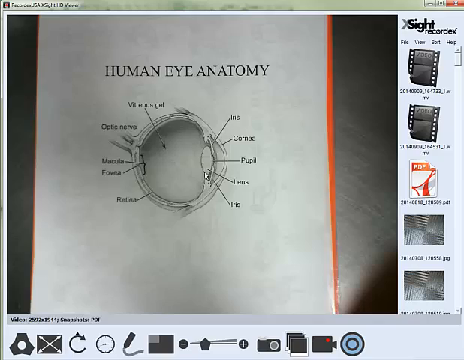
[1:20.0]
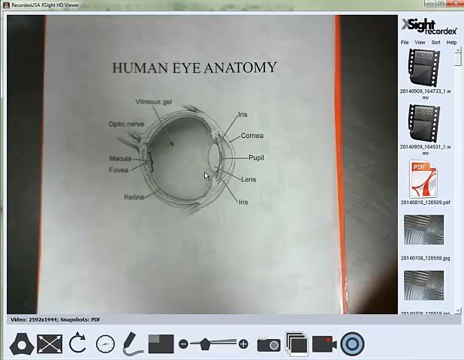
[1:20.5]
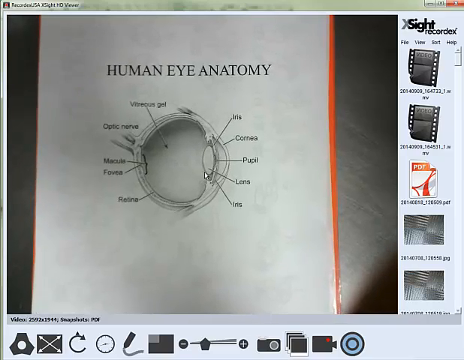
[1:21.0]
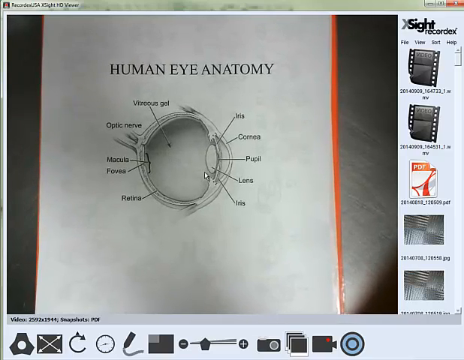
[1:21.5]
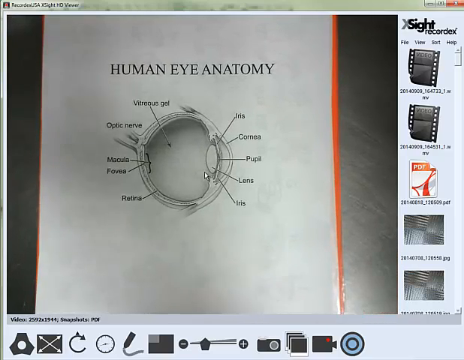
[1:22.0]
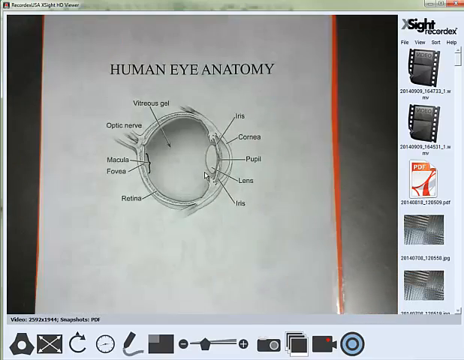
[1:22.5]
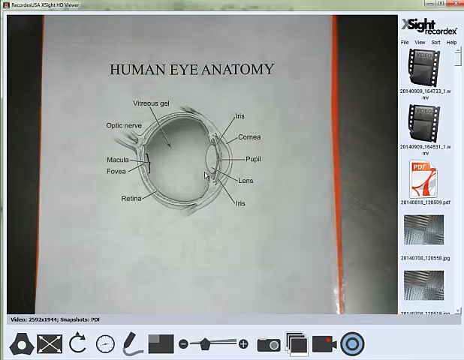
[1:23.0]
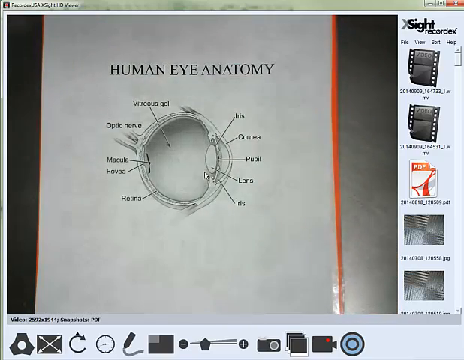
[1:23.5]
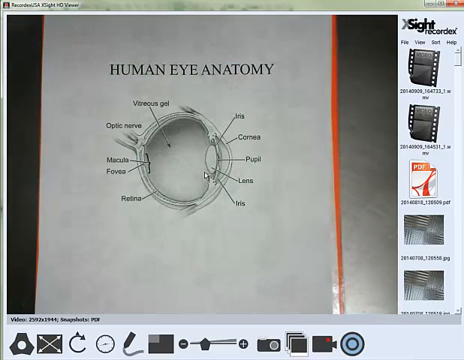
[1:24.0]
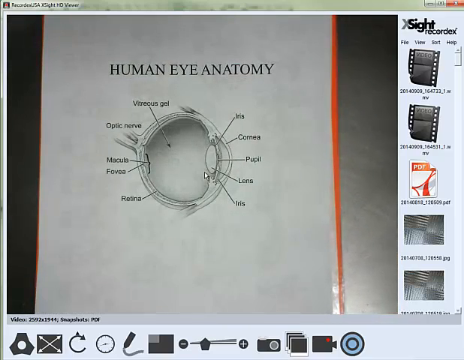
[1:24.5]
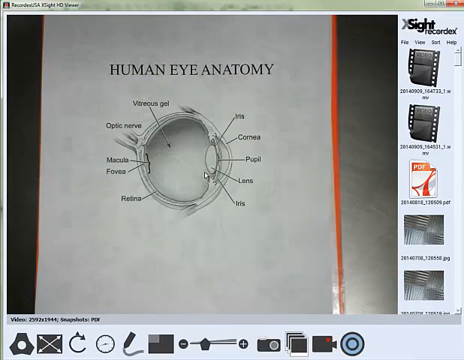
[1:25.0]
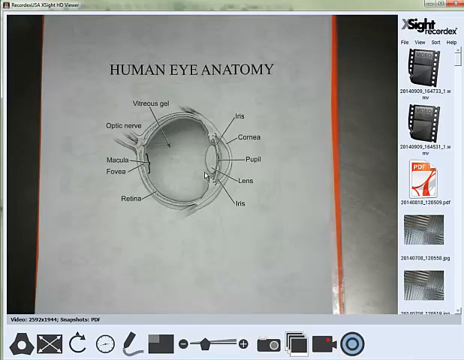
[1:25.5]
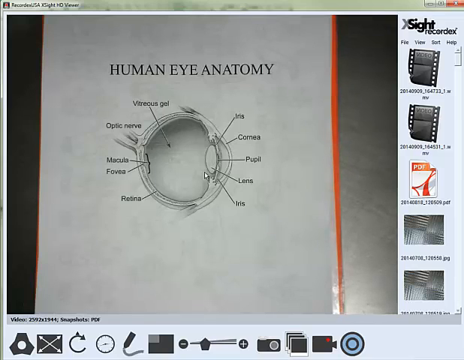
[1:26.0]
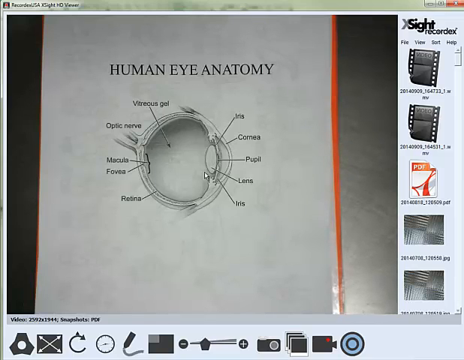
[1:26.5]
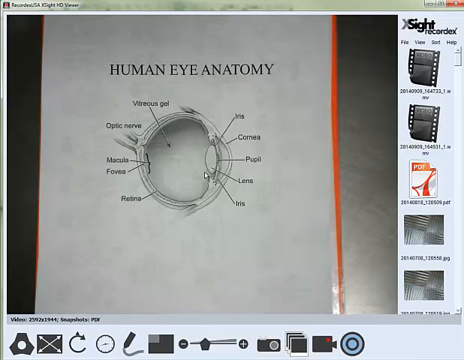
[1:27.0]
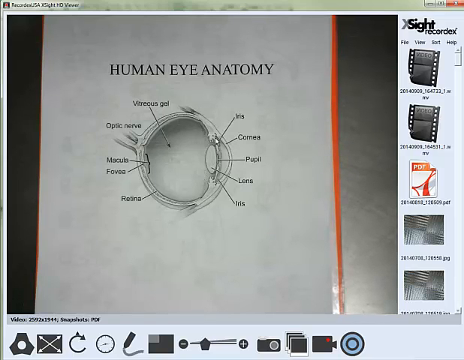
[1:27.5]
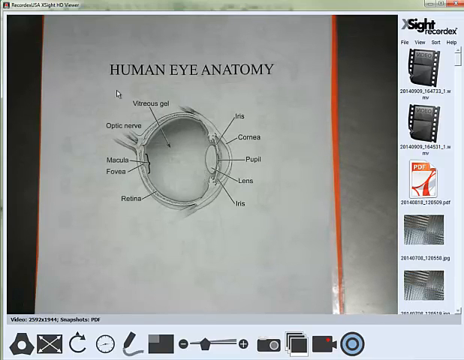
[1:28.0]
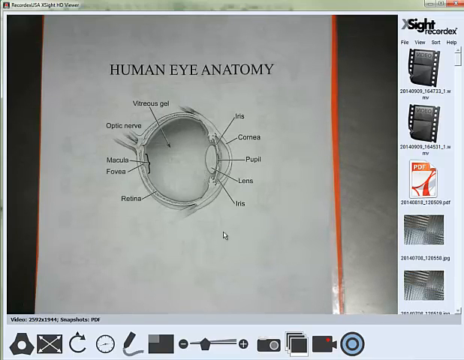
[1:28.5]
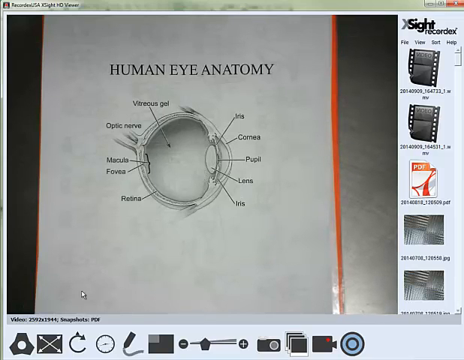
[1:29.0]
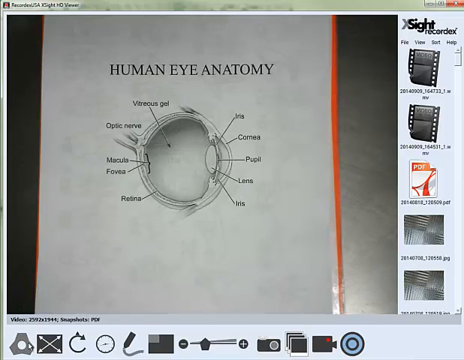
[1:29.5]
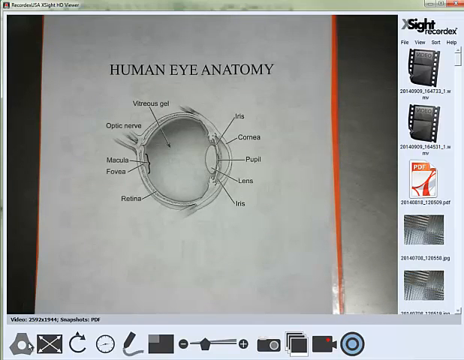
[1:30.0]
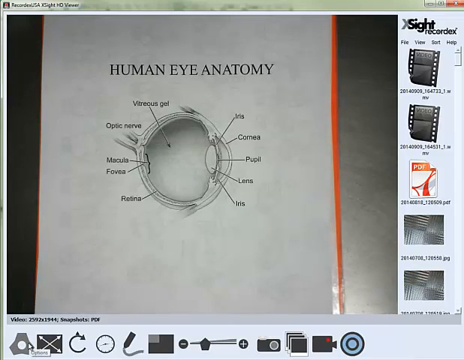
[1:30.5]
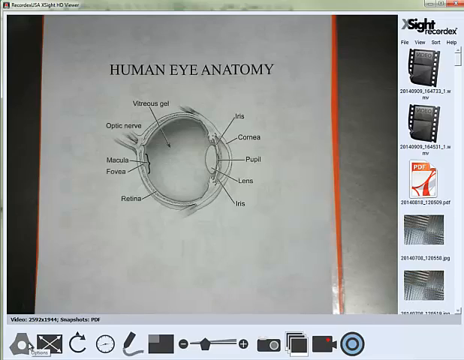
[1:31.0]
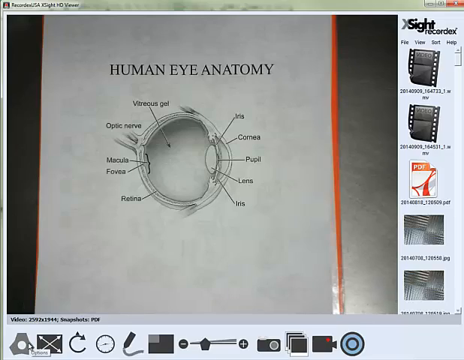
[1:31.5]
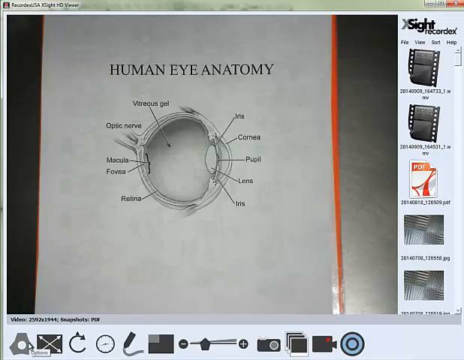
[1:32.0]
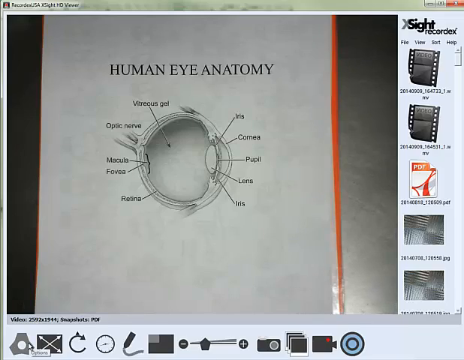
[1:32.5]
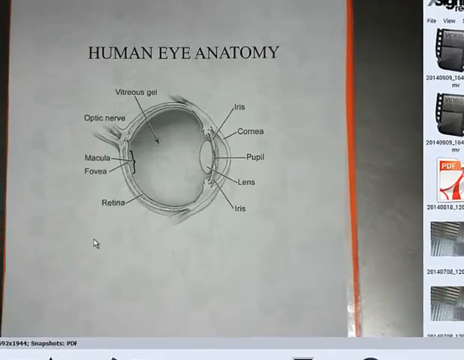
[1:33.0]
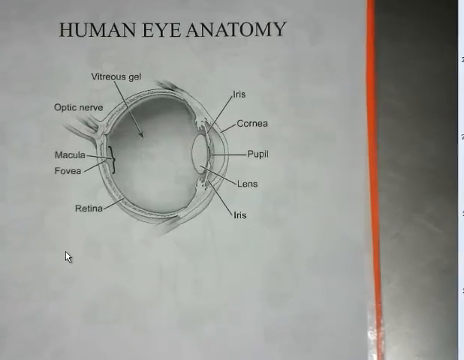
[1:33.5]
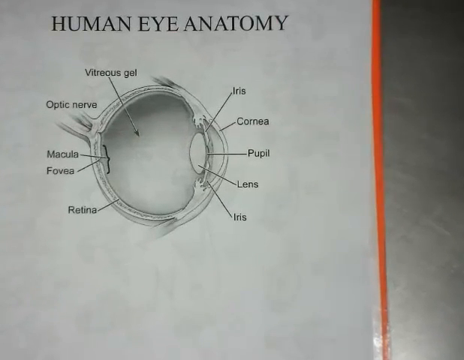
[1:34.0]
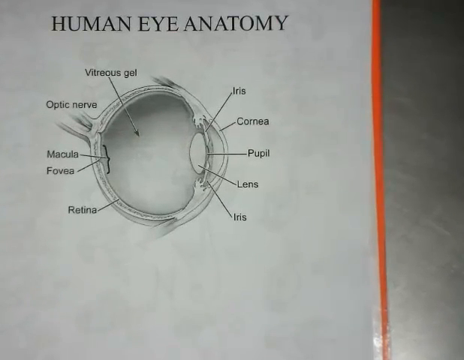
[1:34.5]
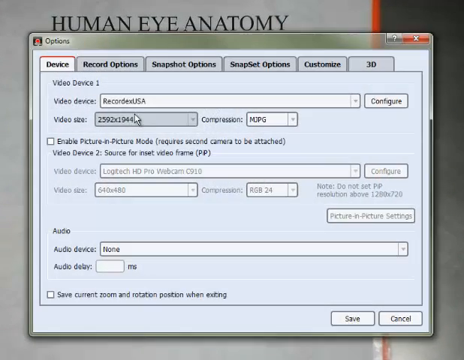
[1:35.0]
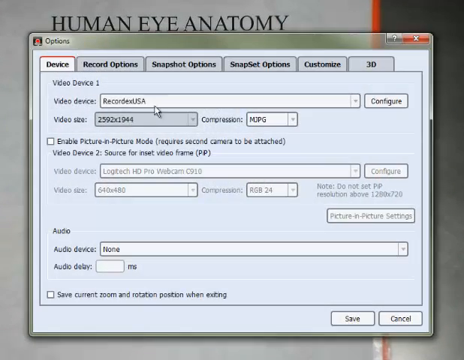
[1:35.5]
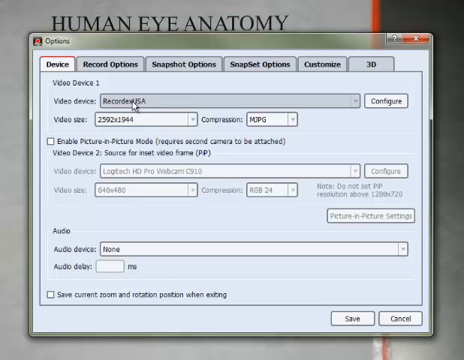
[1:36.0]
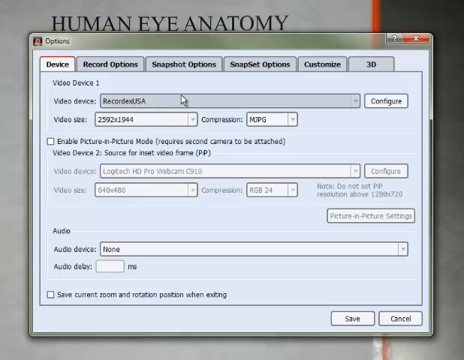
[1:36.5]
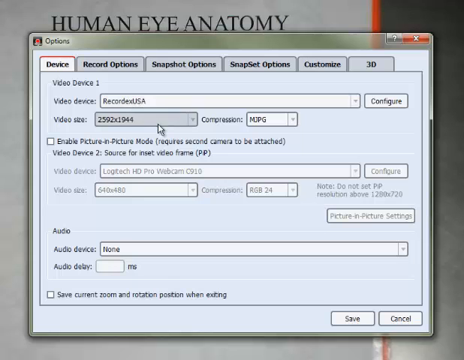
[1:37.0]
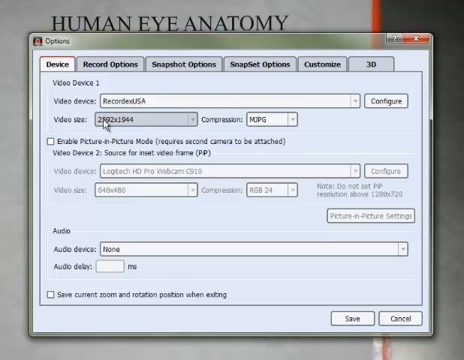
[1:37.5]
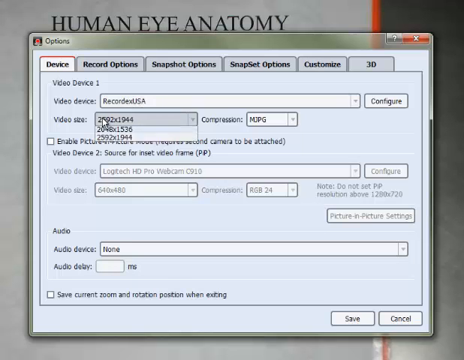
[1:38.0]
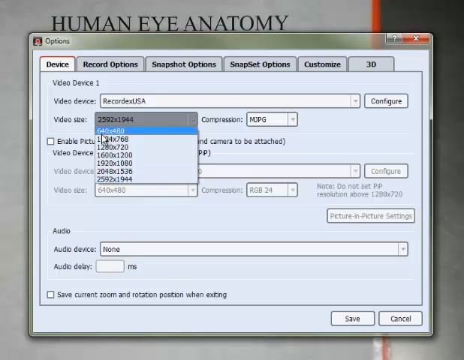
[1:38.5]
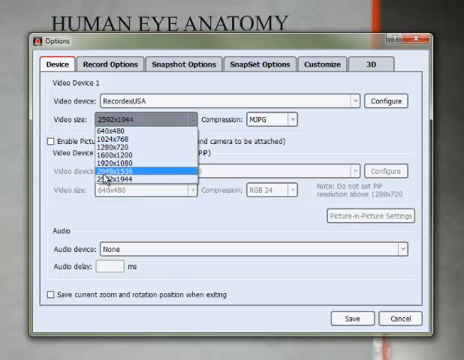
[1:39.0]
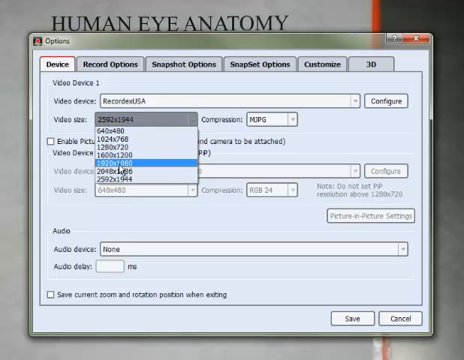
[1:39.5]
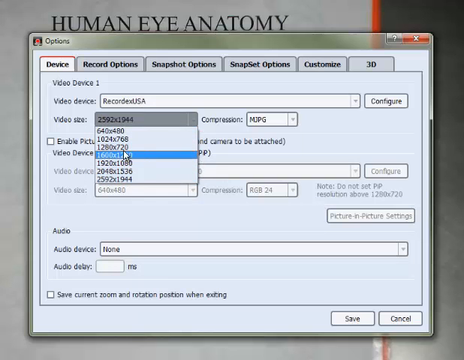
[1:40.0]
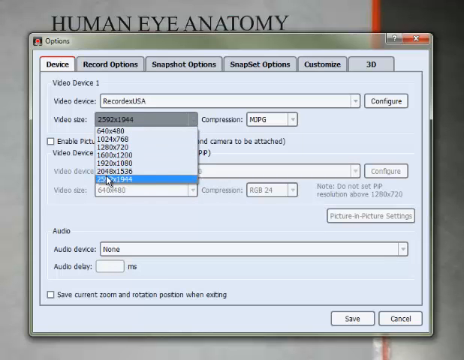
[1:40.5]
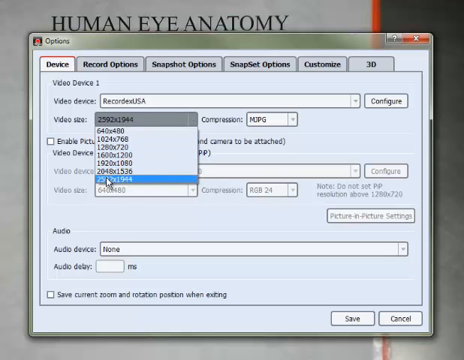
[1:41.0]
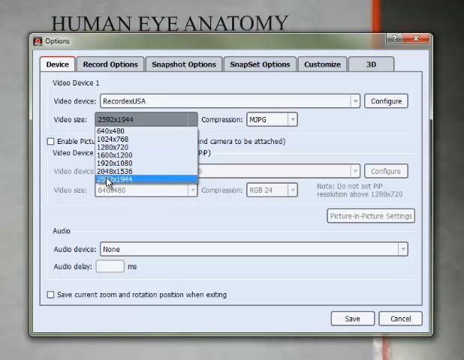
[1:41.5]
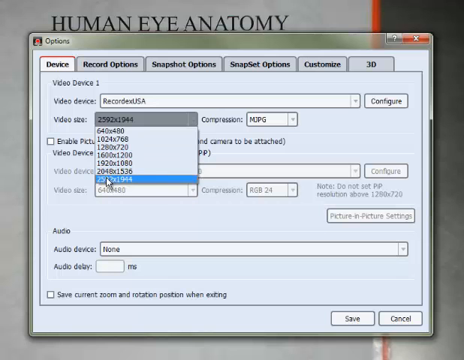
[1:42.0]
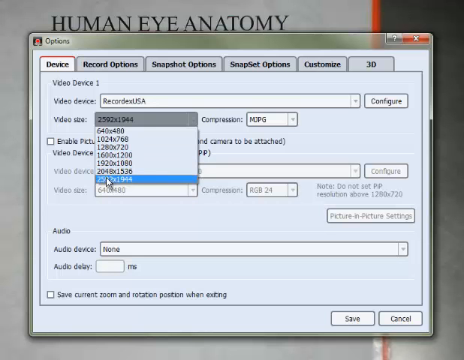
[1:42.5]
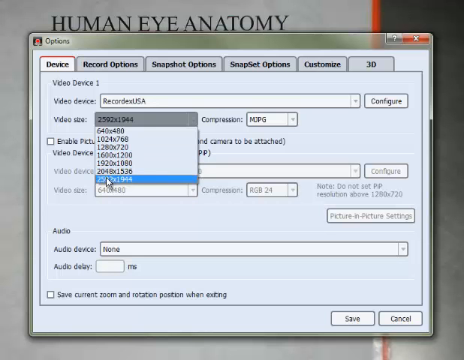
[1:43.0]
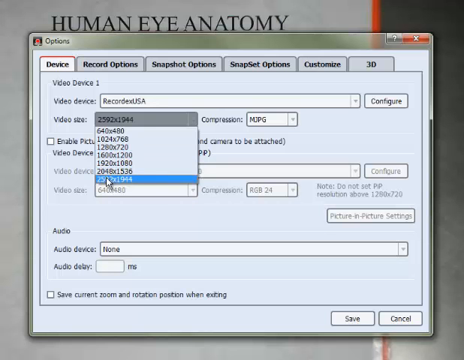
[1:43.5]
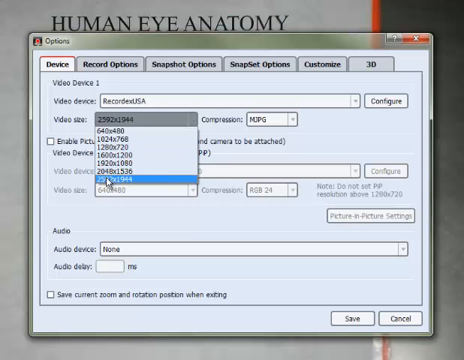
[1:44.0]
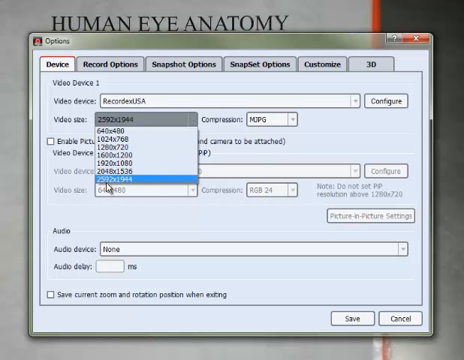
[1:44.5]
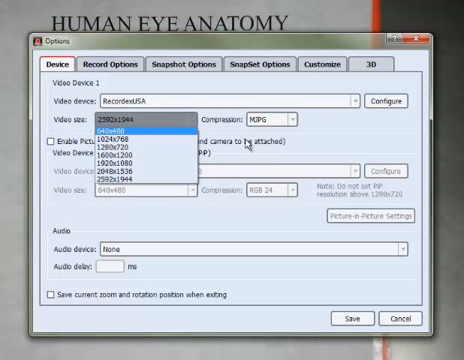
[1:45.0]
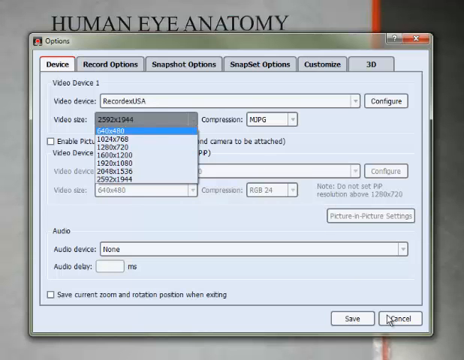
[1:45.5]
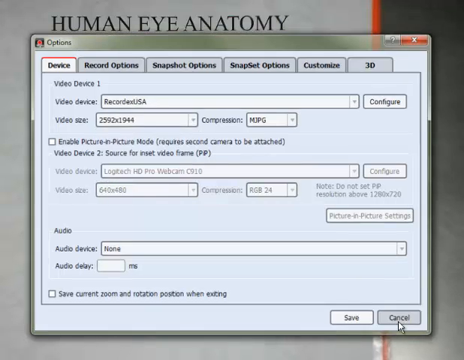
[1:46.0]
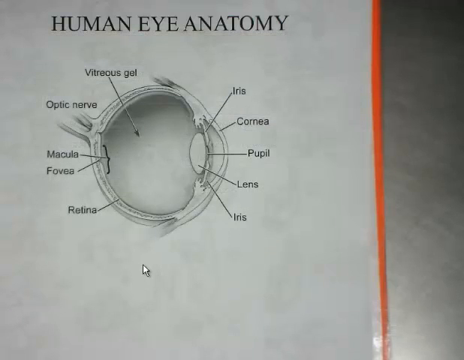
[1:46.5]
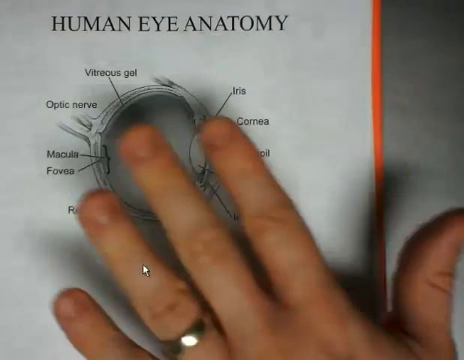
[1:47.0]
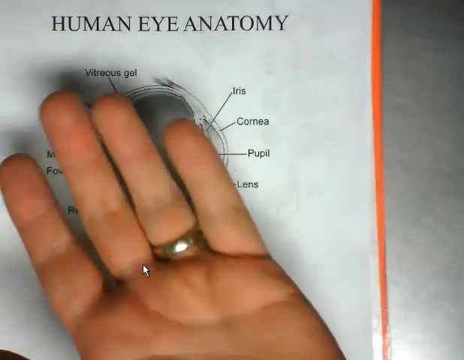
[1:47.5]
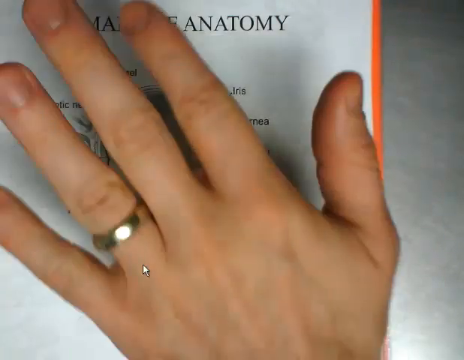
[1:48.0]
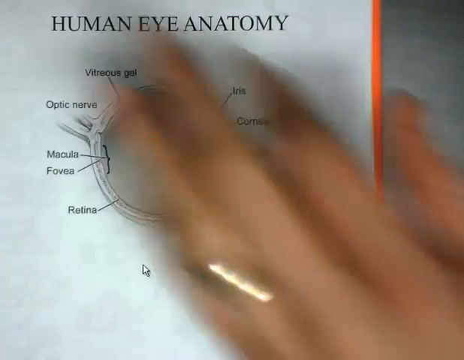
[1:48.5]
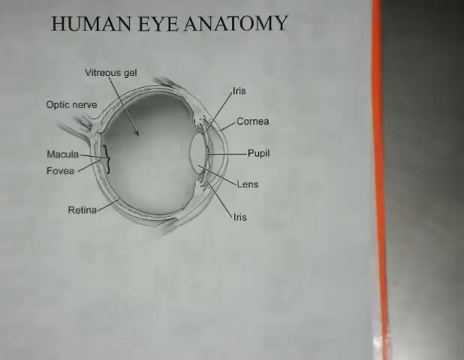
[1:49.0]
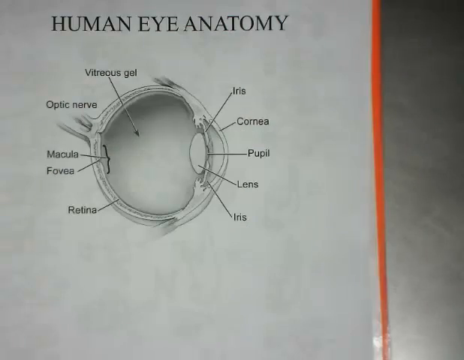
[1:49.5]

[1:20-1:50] A recording shows a white page of a book with "Human Eye Anatomy" up top and, below that, a side-view picture of an eye with different parts labeled and lines going to the labeled areas. A white arrow pointer goes over the different areas of the book. On the right side is a white label with different pictures, and up top it says "X Sight Recordex." It looks as though someone is changing the view of the camera; the image gets a little foggy and cloudy, and then they zoom in. A box pops up on the screen with "options" written above it, with different tabs for options that can be clicked and boxes that can be filled out with different information.